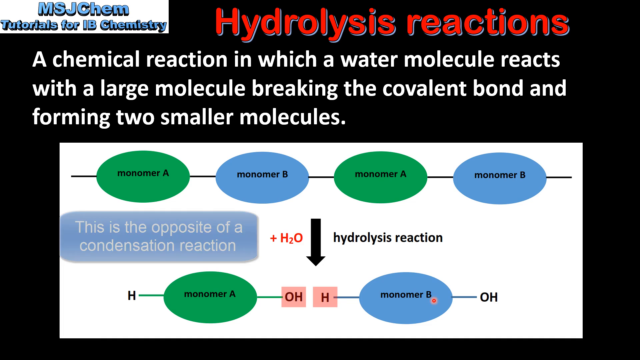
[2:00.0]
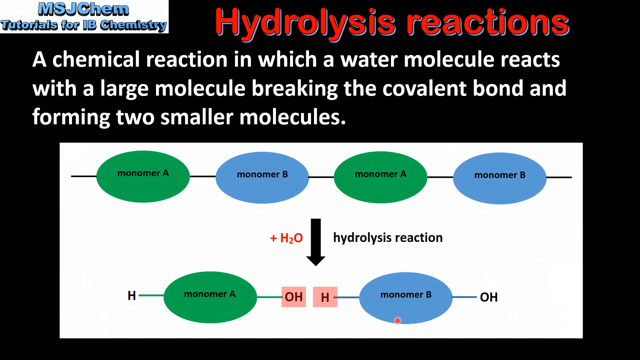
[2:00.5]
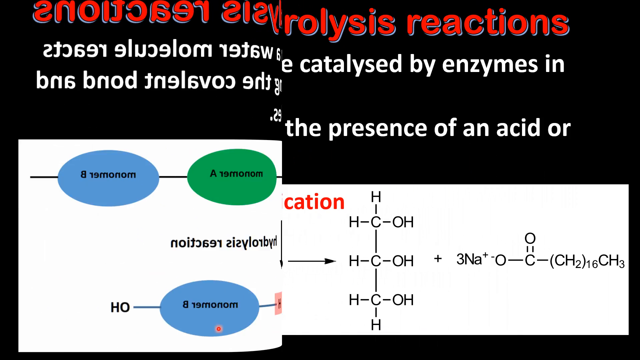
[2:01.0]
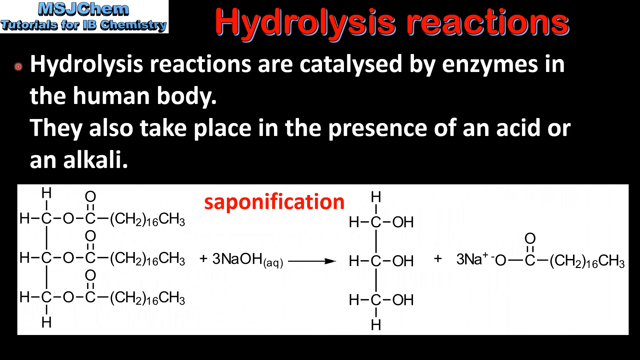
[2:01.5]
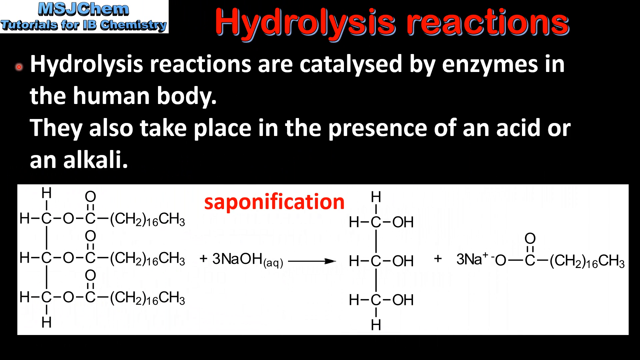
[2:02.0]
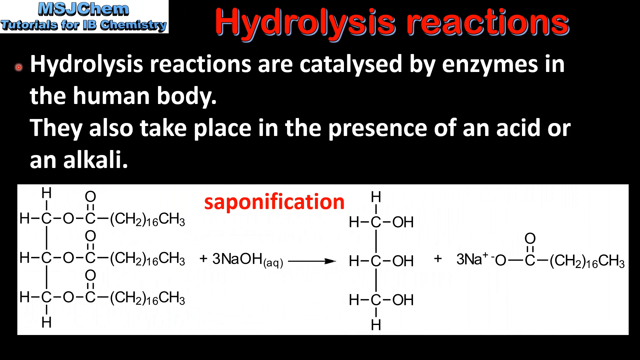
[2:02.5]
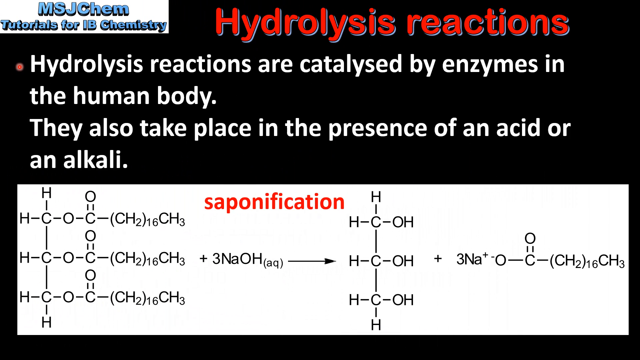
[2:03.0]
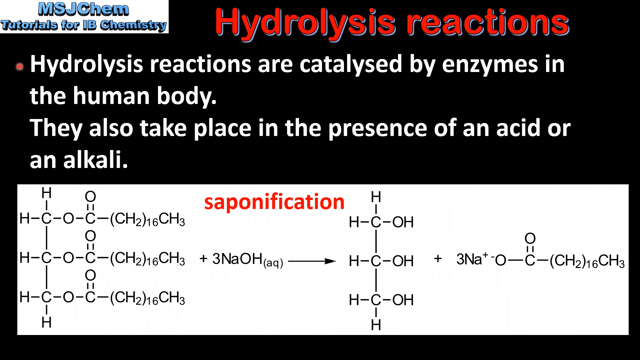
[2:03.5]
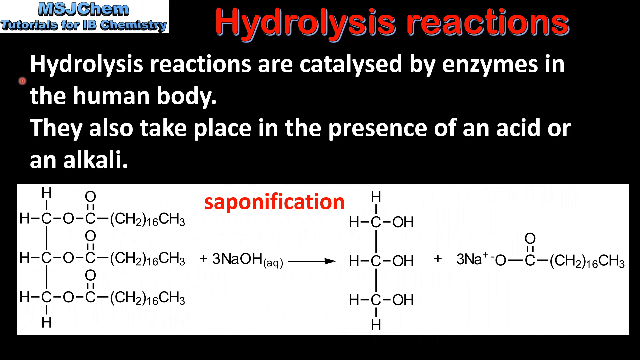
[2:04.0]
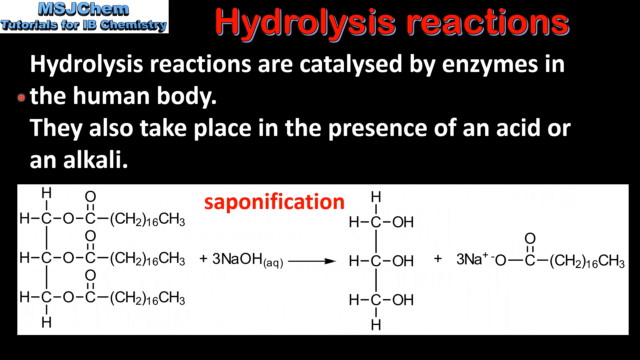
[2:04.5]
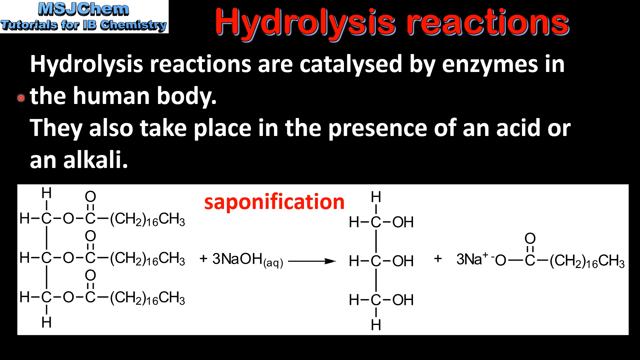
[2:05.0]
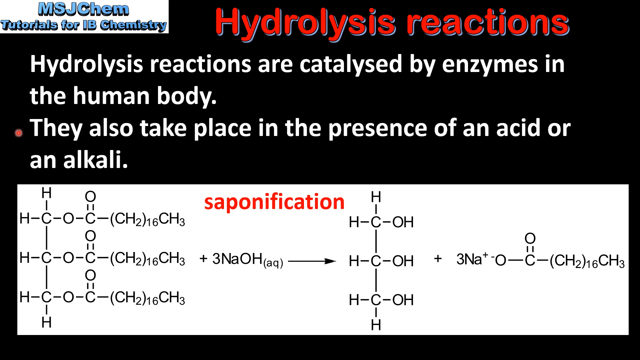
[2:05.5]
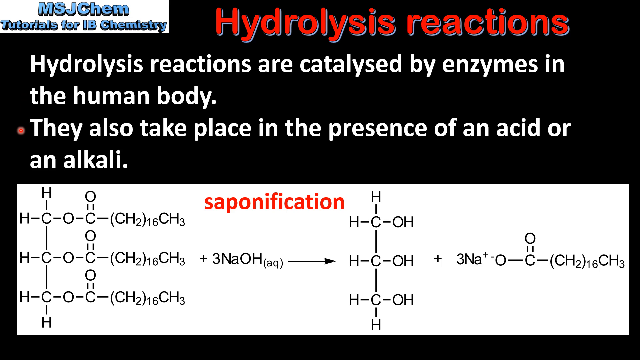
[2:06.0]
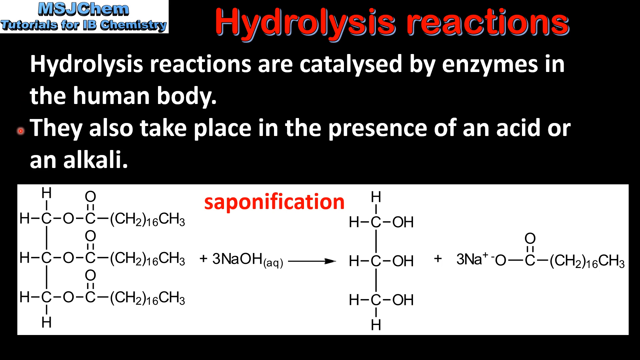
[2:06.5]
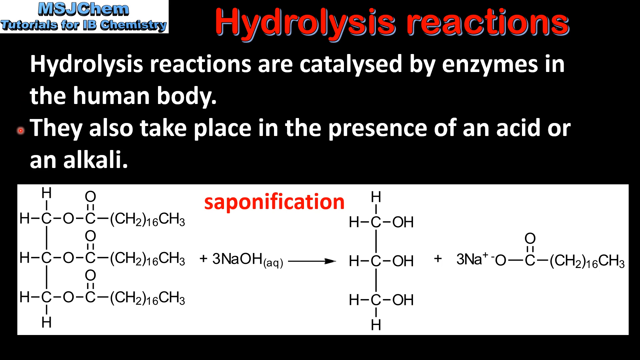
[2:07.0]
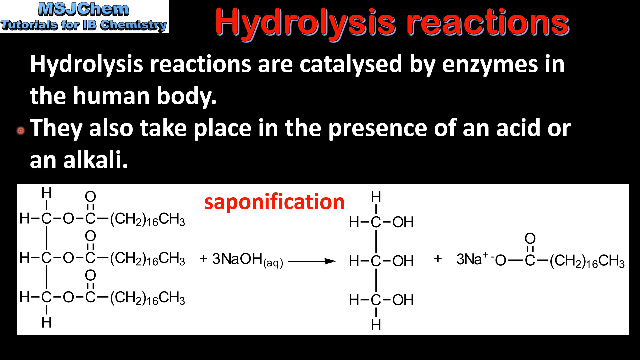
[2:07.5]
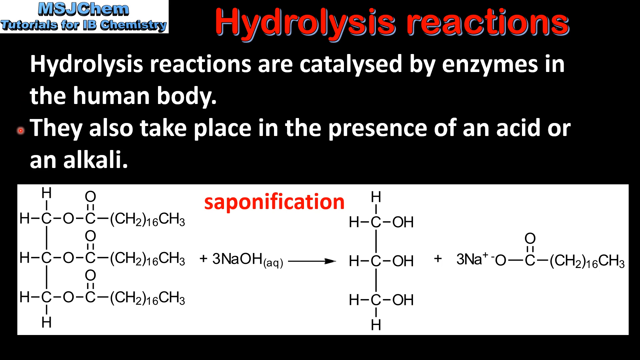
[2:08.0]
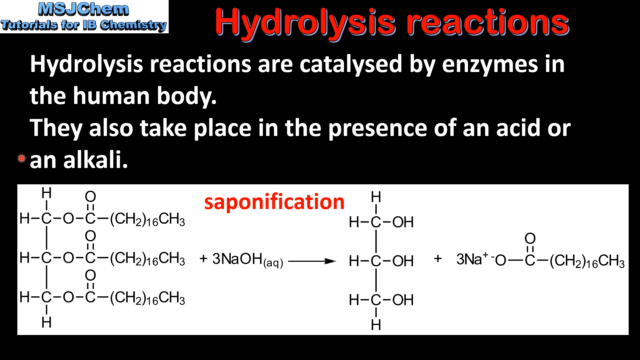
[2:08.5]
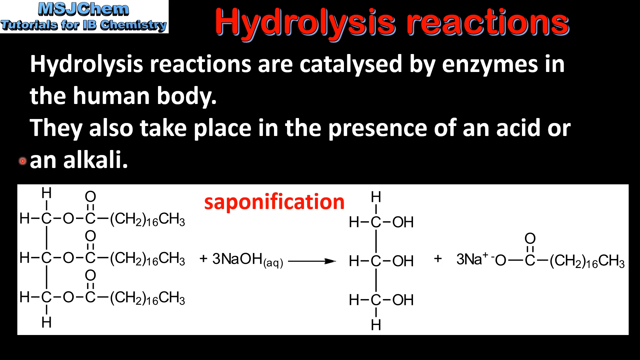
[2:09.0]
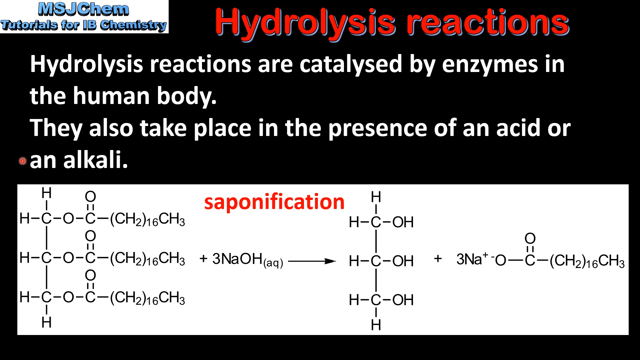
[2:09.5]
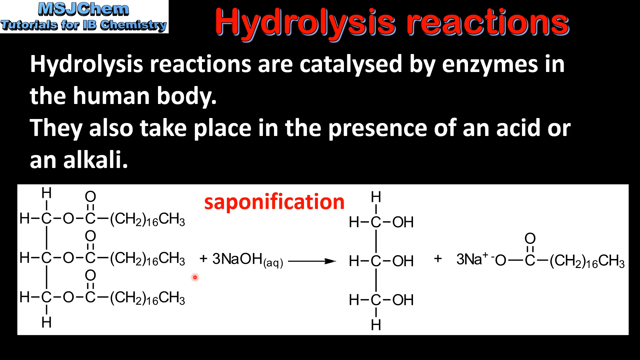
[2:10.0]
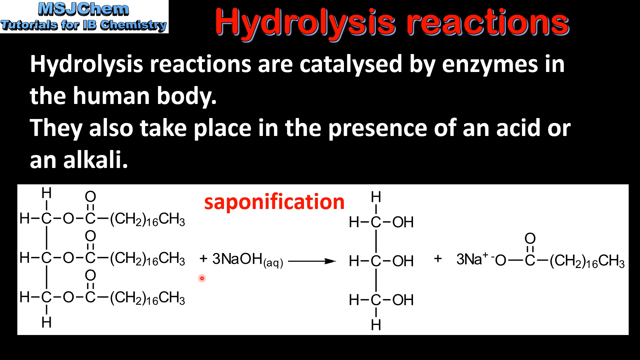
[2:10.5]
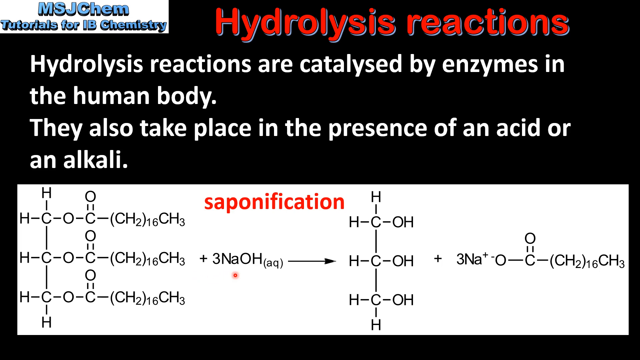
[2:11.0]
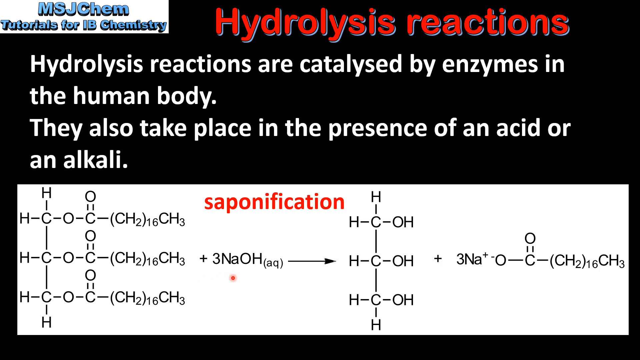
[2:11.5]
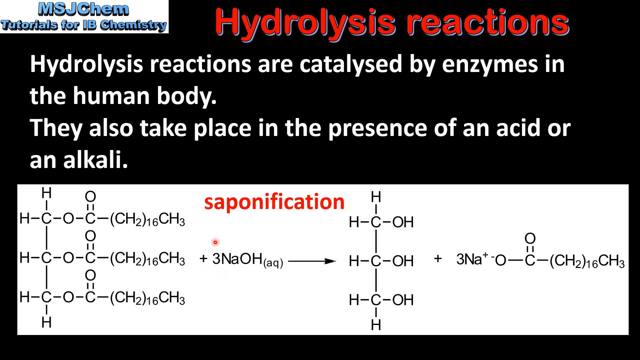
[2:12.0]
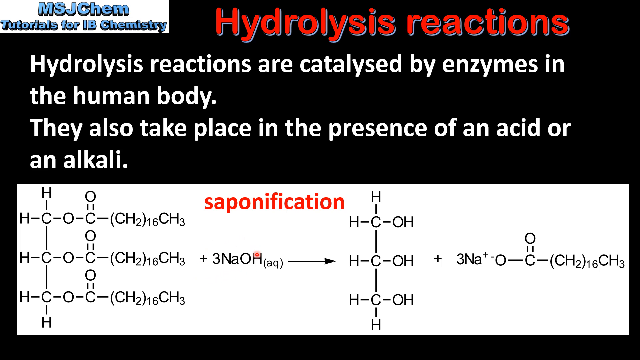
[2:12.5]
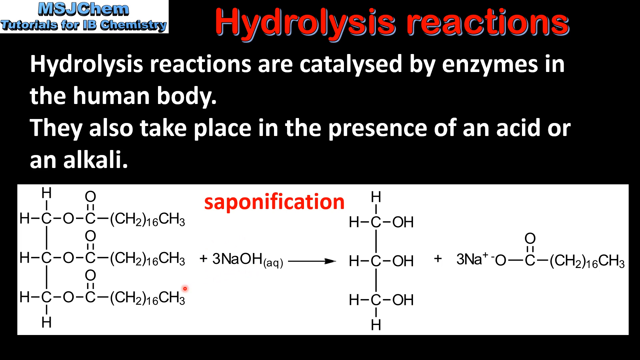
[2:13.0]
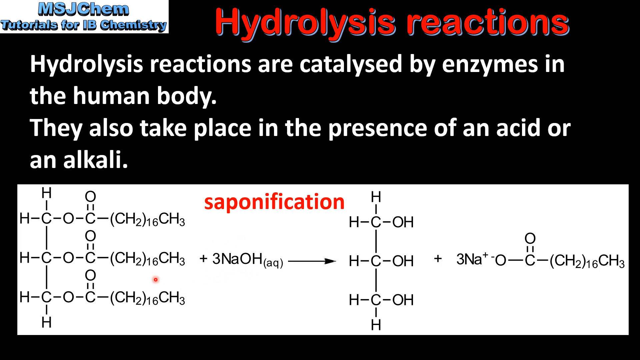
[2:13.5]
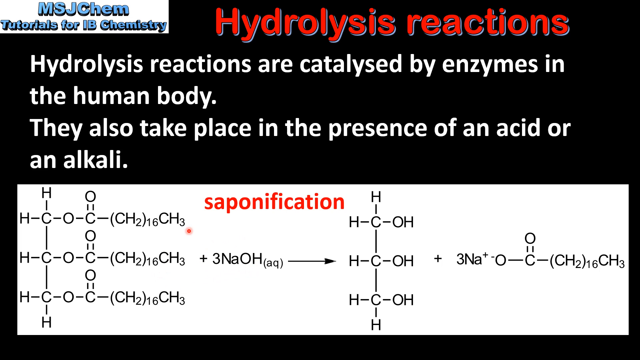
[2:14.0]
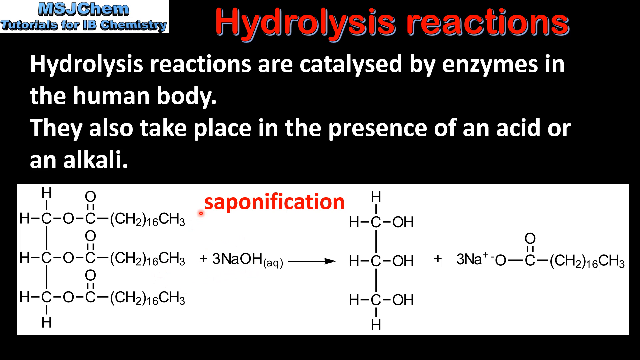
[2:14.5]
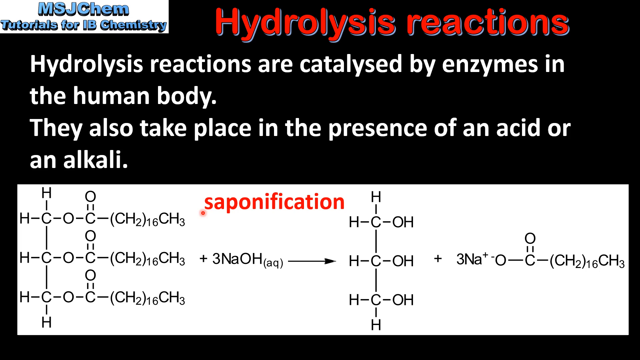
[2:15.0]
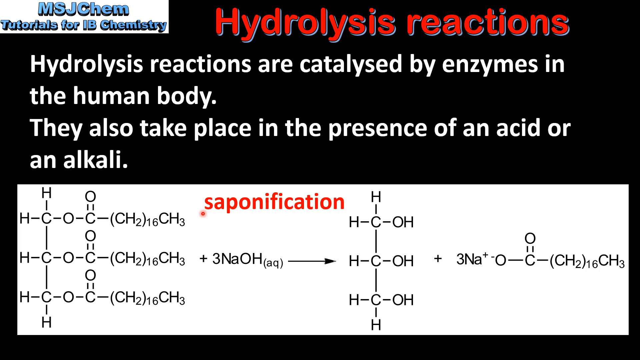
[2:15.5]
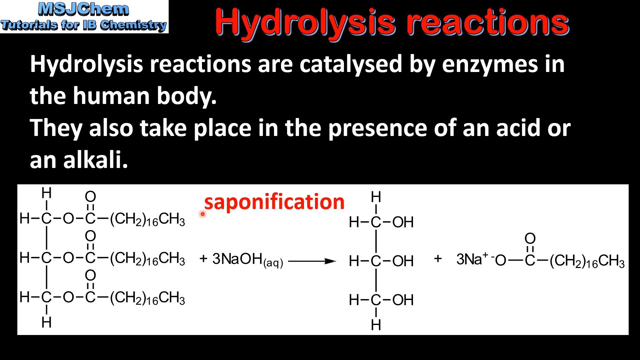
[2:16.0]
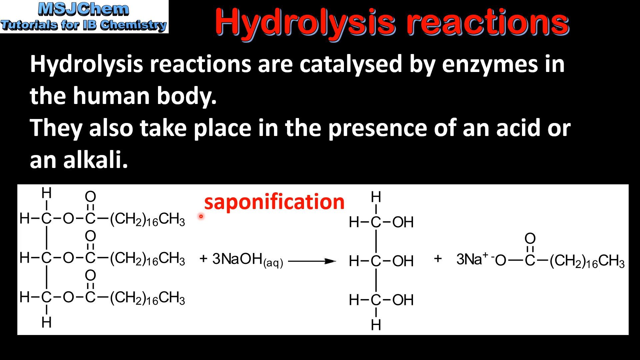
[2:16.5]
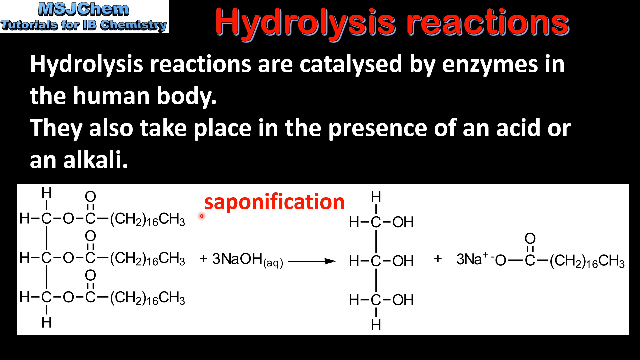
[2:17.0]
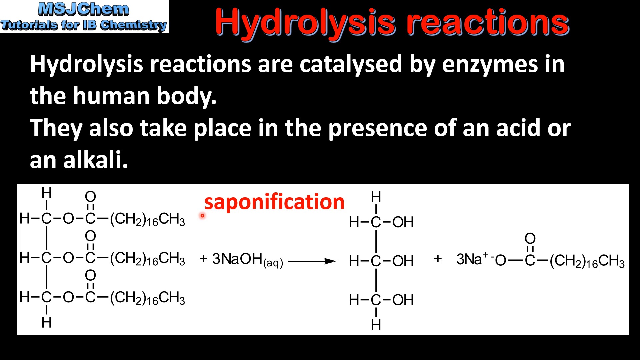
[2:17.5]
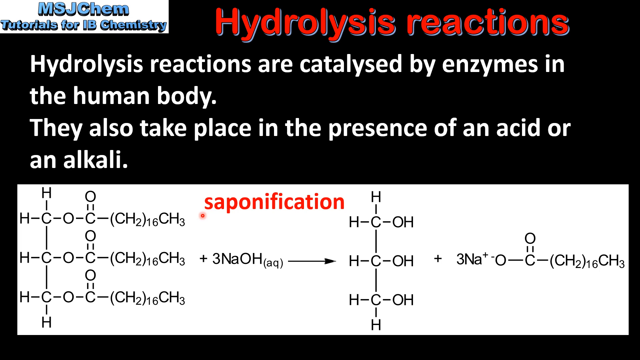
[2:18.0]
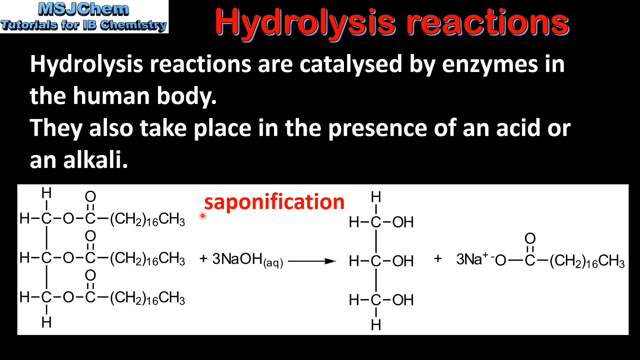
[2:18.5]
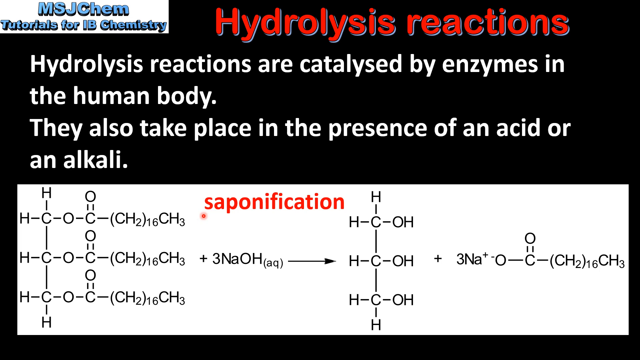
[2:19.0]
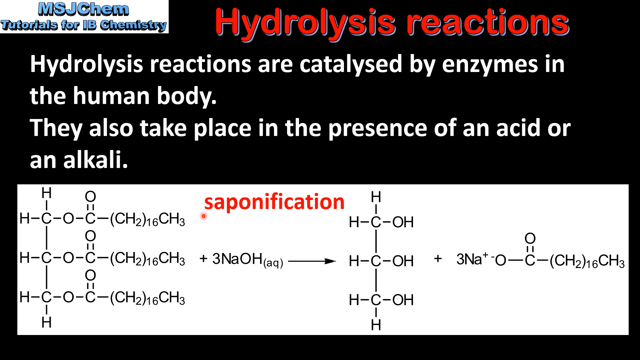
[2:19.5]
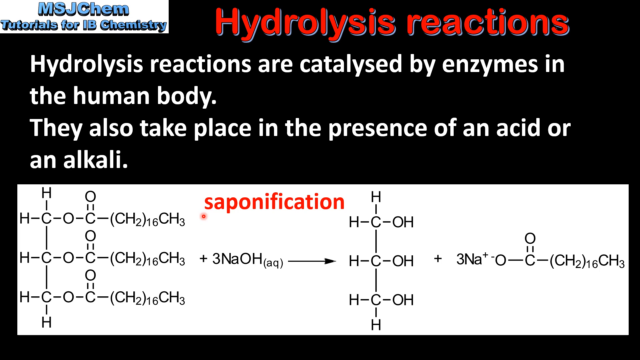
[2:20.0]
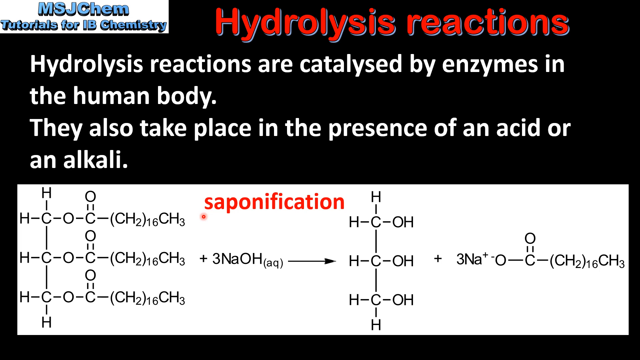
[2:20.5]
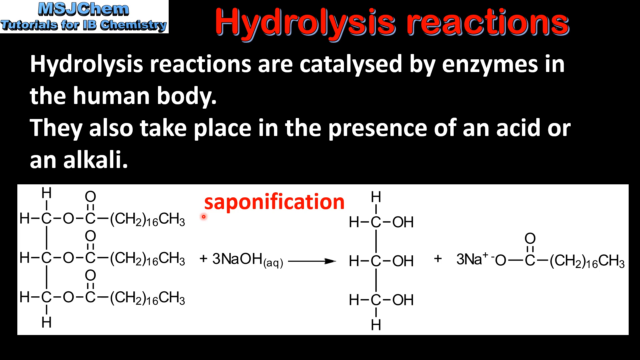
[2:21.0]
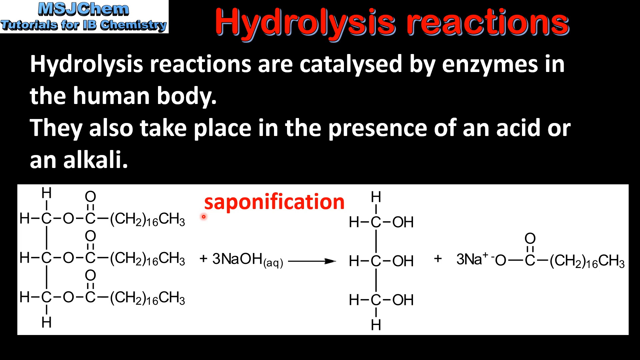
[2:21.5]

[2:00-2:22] A black background shows red text reading "hydrolysis reactions" and a white banner at the top left corner reading "MSJ Chem Tutorials for IB Chemistry" in blue font. A paragraph of white text reads "a chemical reaction in which a water molecule reacts with a large molecule, breaking the covalent bond and forming two smaller molecules." A very large white banner has blue and green circles labeled in black text "monomer A, monomer B, monomer A, monomer B, monomer A, and monomer B." A blue box with white text reads "this is the opposite of a condensation reaction," with red text next to it reading "plus H2O." A small black arrow points down to pink boxes reading "OH" and "H," and a small black arrow is labeled "hydrolysis reaction." The small blue banner disappears. The video then transitions to another screen titled "hydrolysis reactions," with white text reading "hydrolysis reactions are catalyzed by enzymes in the human body. They also take place in the presence of an acid or an alkali." A large white banner has red text reading "saponification" and many letters such as "H," "HCO," "OCO," "HCOCO," "HCOCH," and "CH2-16-CH3" three times, with a black arrow pointing, followed by more black text. A small red circle cursor moves through different elements of the screen.